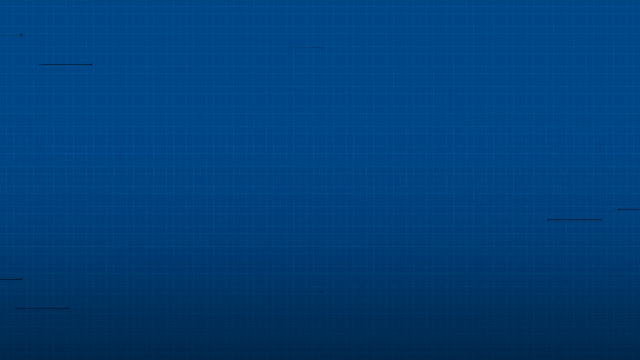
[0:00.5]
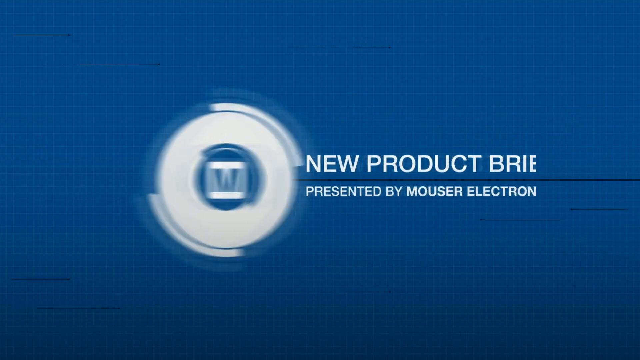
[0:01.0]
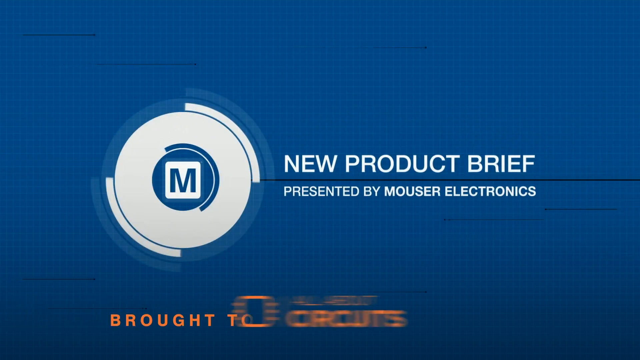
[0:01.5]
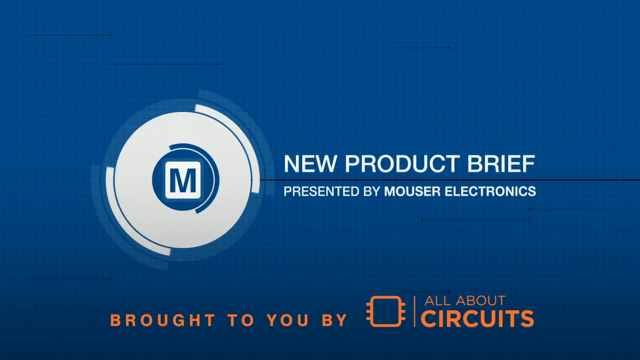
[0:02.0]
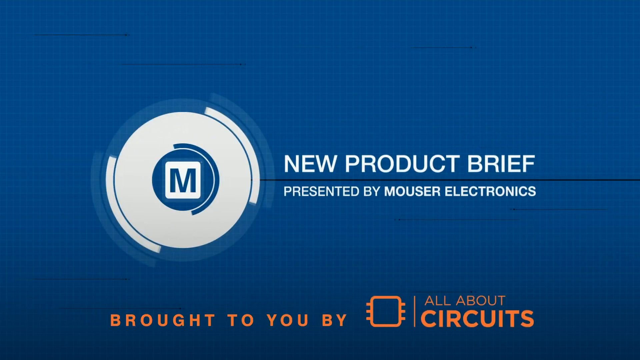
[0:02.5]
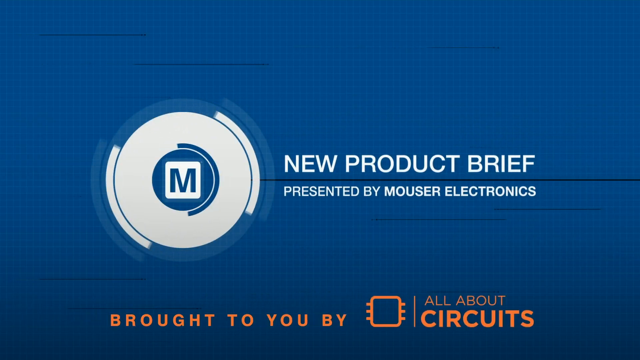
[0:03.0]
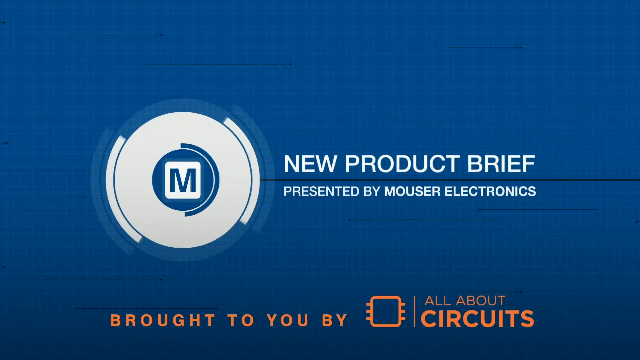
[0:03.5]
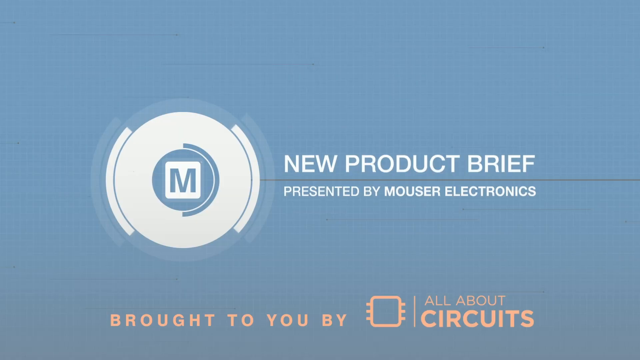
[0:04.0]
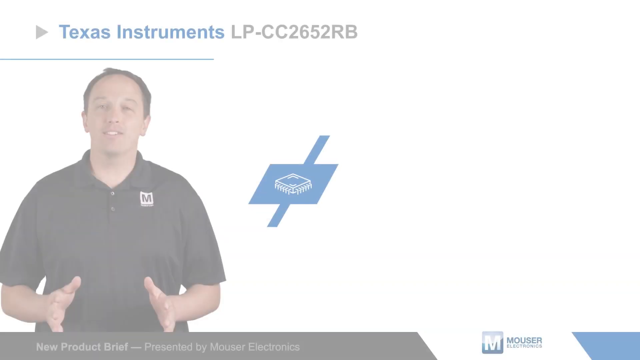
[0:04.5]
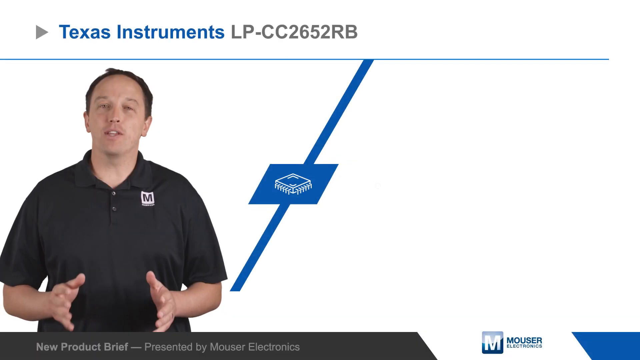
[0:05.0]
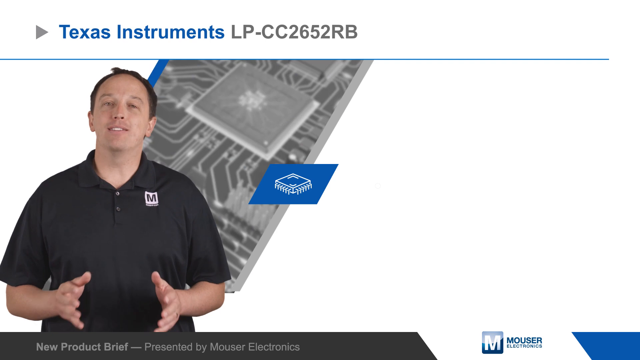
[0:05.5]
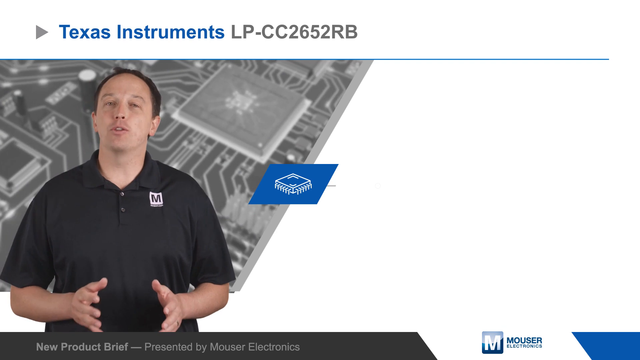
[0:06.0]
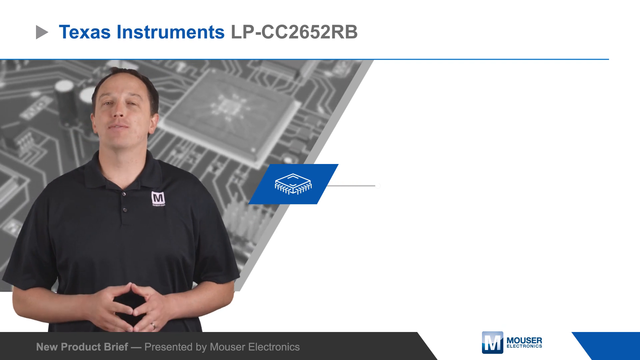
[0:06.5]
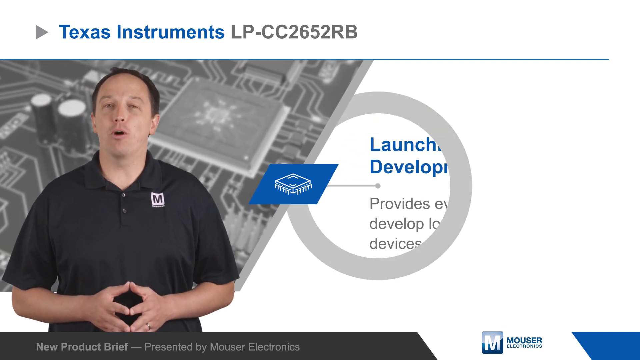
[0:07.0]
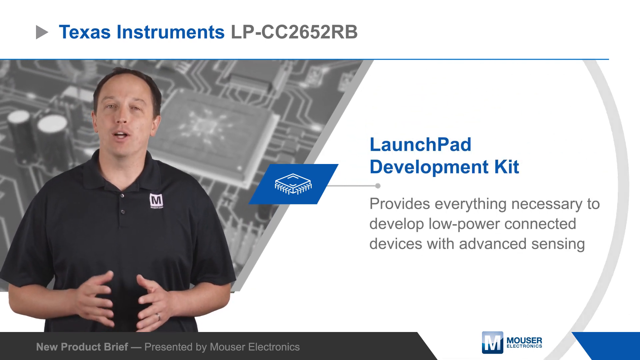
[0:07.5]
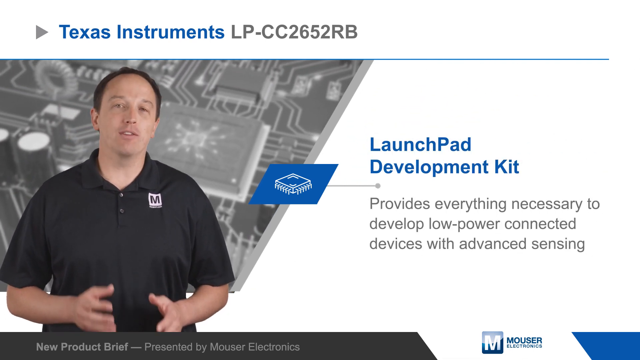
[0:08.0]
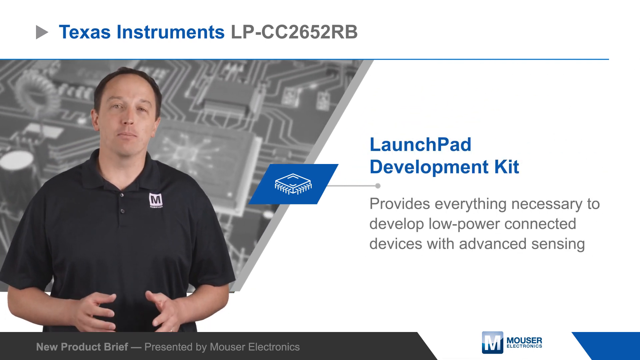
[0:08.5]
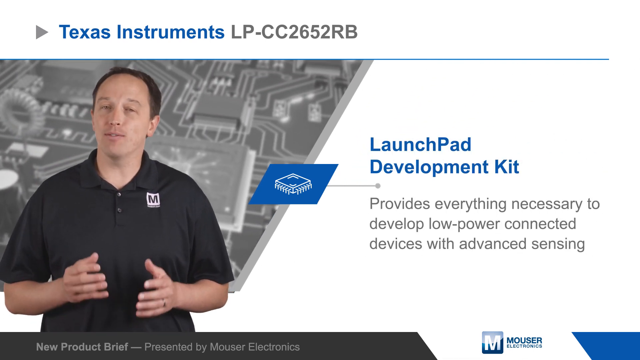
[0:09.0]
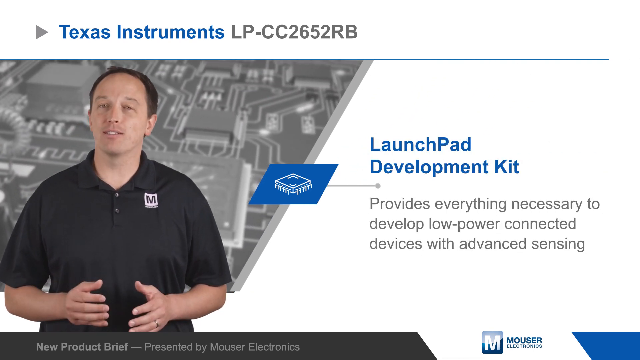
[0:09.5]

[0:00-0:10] The video opens with what seems to be a Mouser Electronics new product brief: a blue background with a white logo. A transition leads to a man on the left side of a presentation about Texas Instruments, apparently about a LaunchPad development kit for developing low-power connected devices. The man wears something dark-ish bearing the Mouser Electronics company logo, a tiny white "M" on one side.